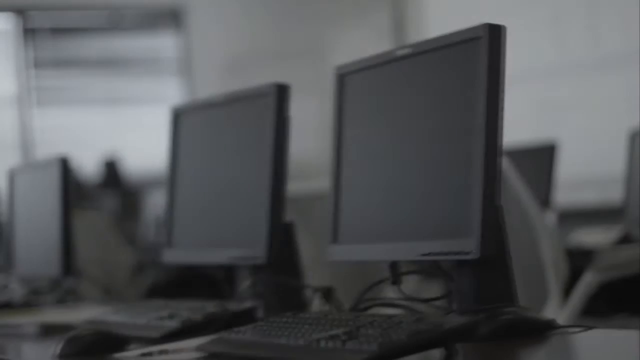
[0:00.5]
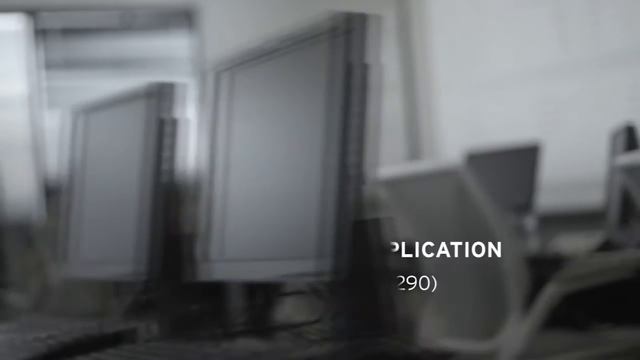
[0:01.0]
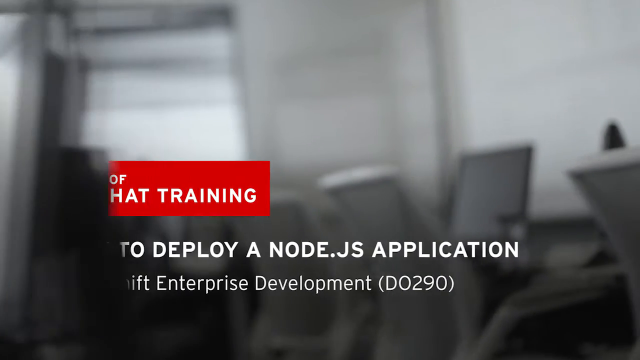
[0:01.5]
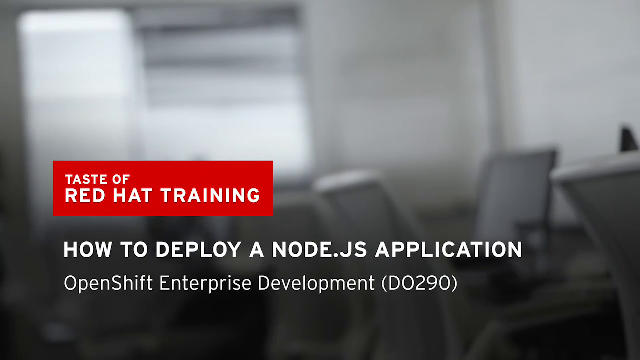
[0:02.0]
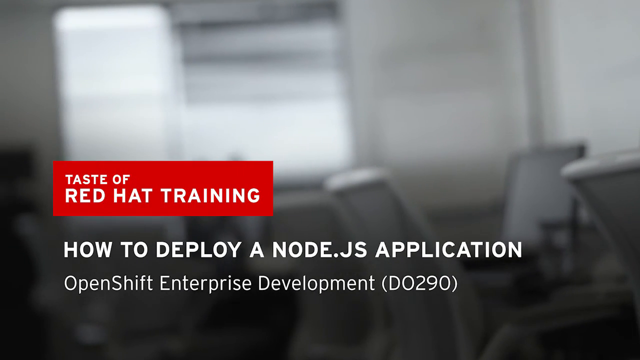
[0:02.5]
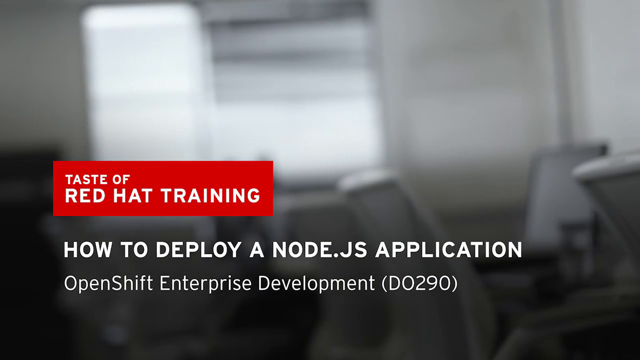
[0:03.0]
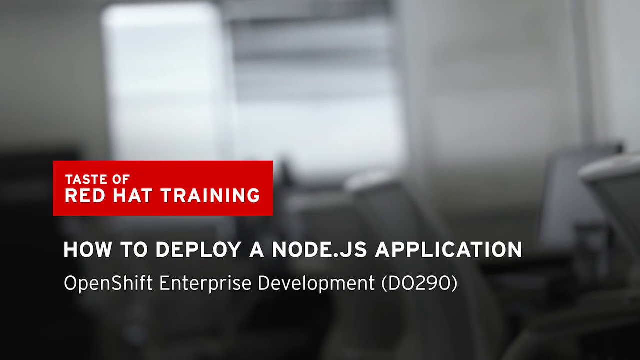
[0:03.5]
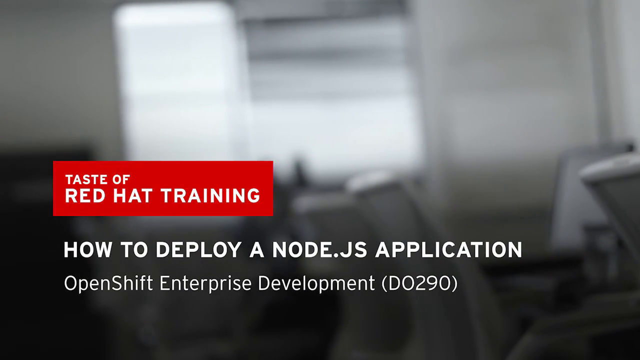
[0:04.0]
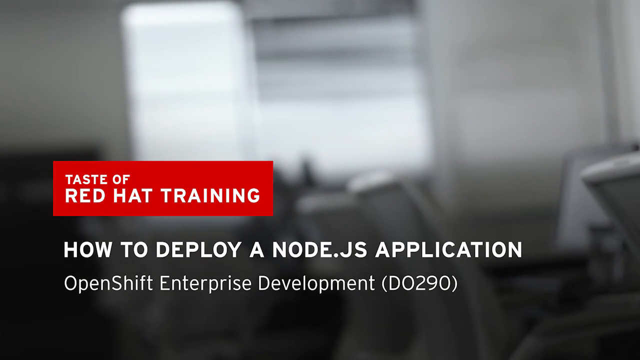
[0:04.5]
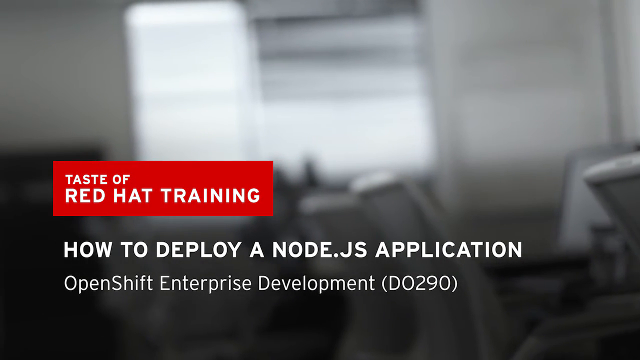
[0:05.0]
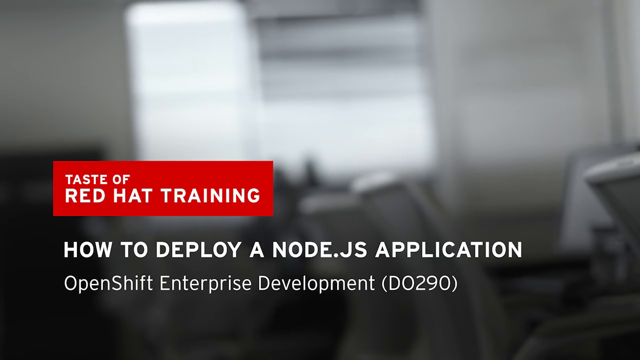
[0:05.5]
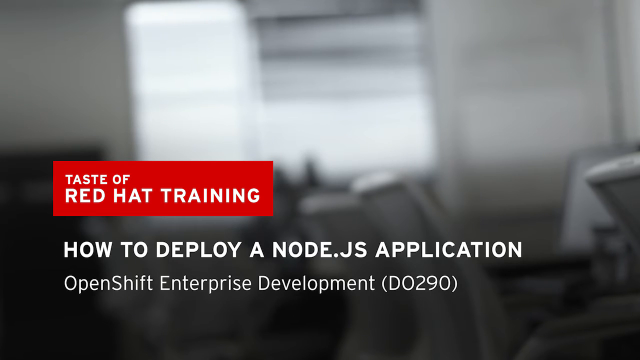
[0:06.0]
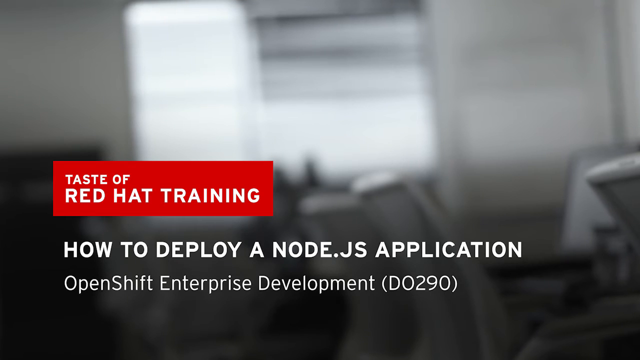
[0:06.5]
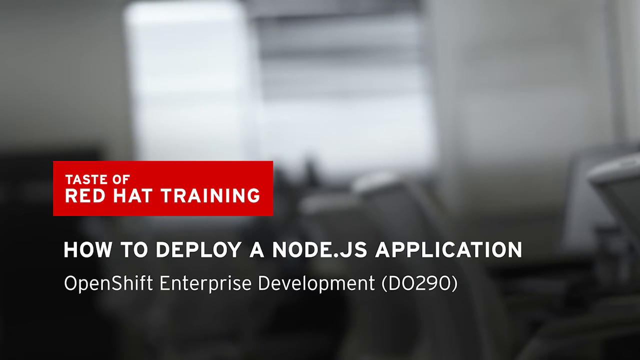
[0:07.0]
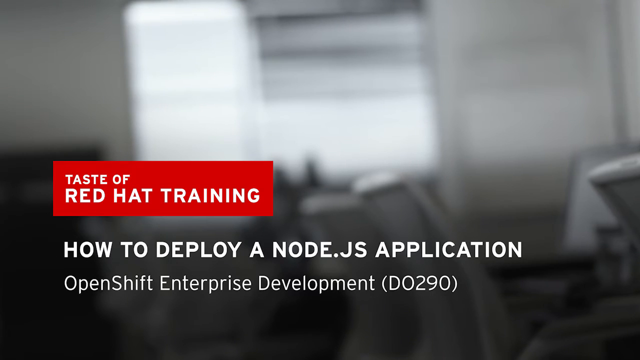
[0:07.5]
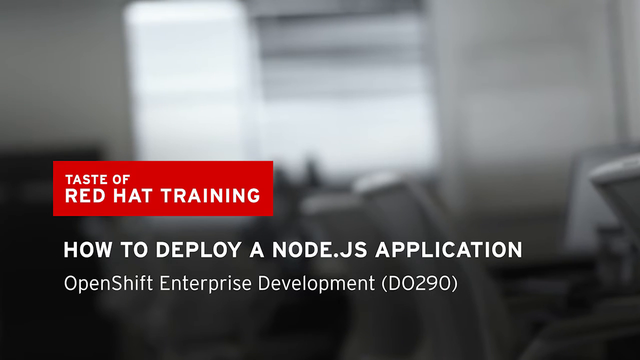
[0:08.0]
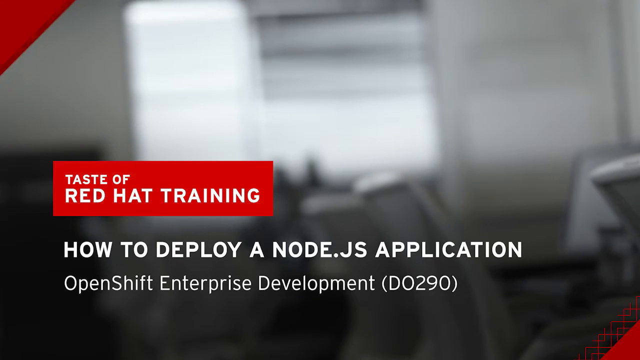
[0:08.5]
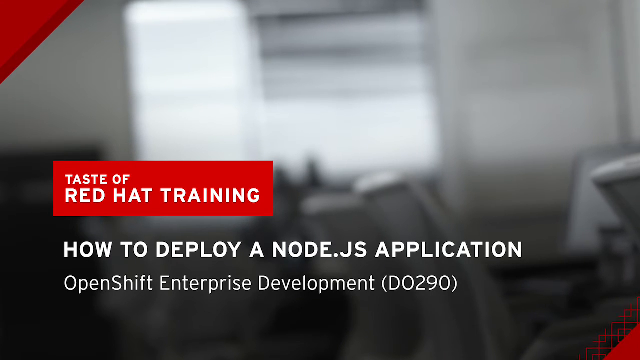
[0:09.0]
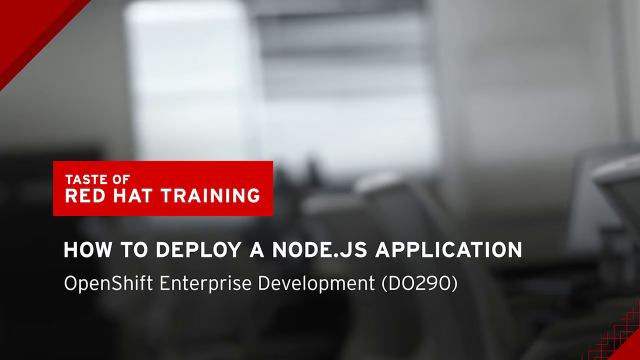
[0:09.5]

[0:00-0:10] The video begins with a black screen that slowly fades in to show an office with multiple desks facing the same direction, all with black-screened monitors and gray office chairs tucked under them. Text appears that reads "Taste of Red Hat Training. How to deploy a Node.js application. OpenShift Enterprise Development D0290." The office in the background is blurred out, but on one wall there is a large white dry erase board. Multiple windows with partially closed blinds are also visible, and one of the blinds is jumbled up and looks to be damaged.